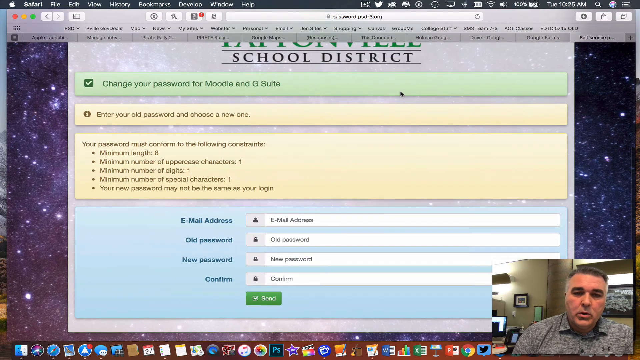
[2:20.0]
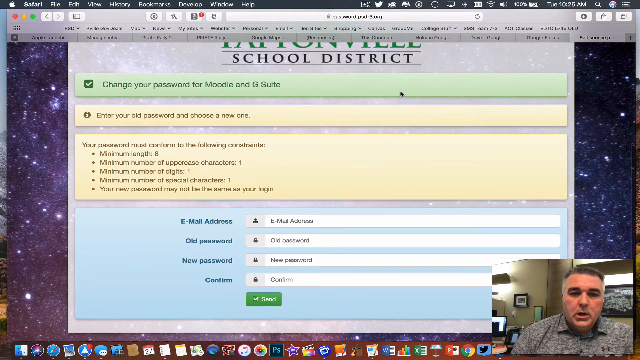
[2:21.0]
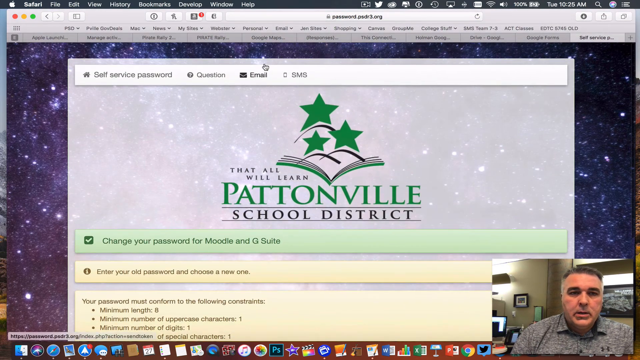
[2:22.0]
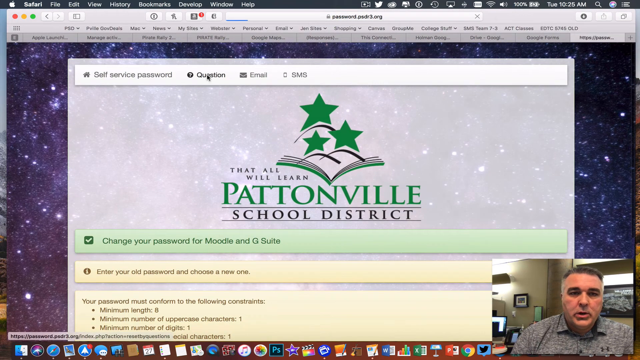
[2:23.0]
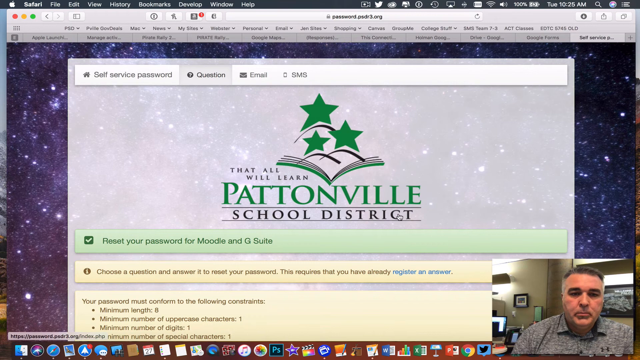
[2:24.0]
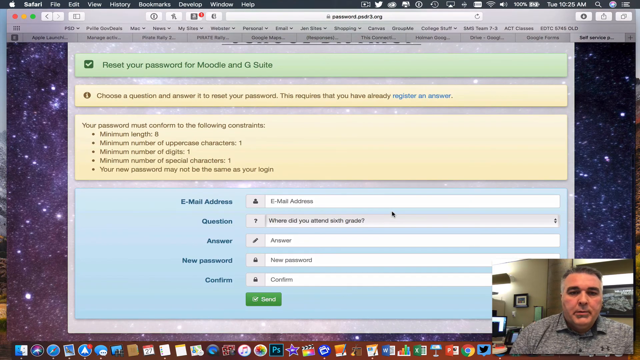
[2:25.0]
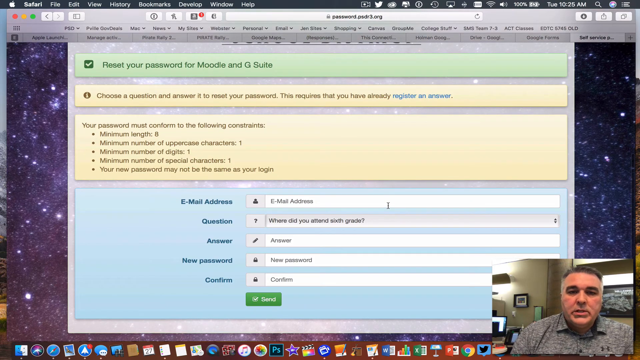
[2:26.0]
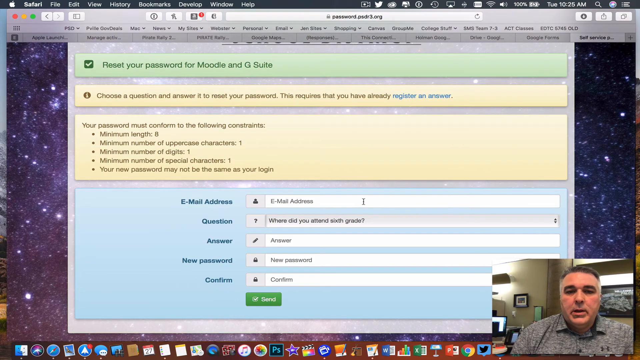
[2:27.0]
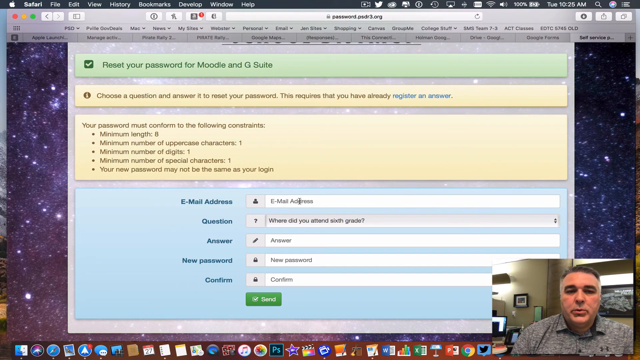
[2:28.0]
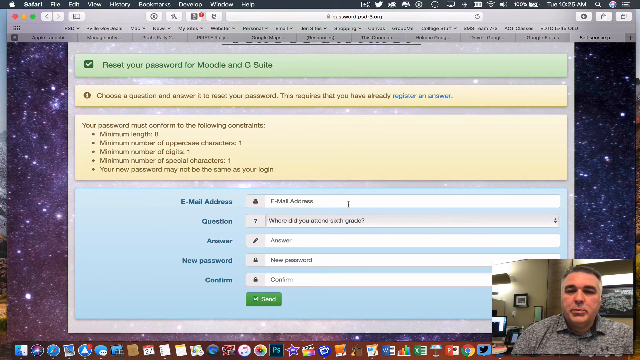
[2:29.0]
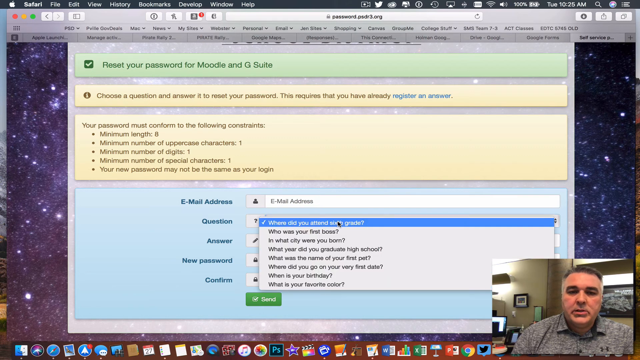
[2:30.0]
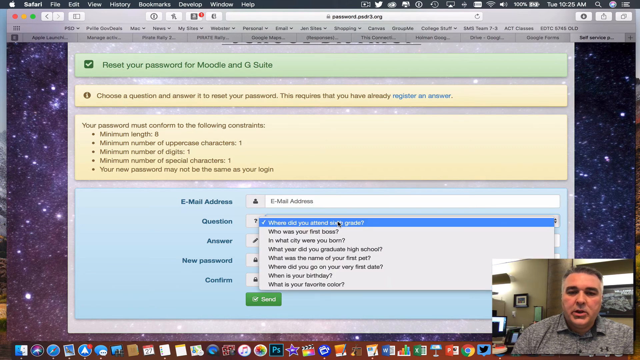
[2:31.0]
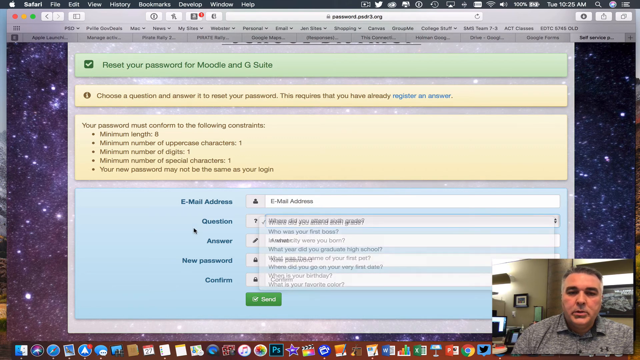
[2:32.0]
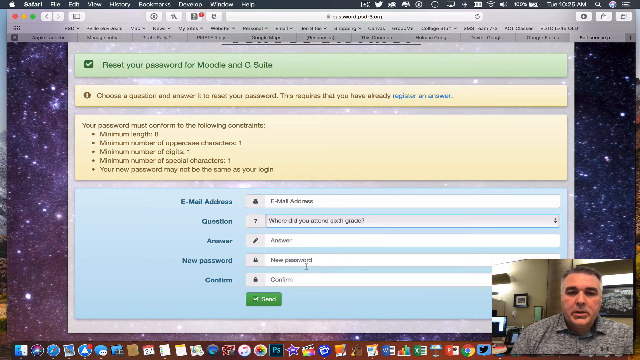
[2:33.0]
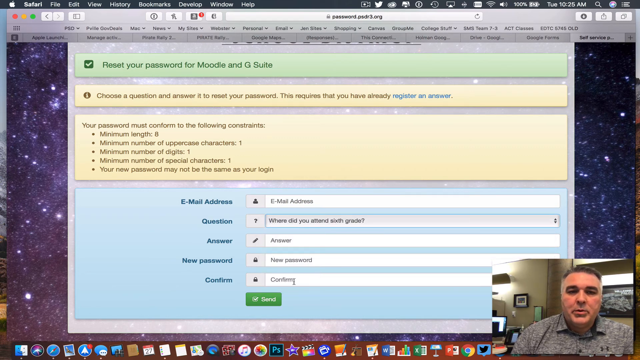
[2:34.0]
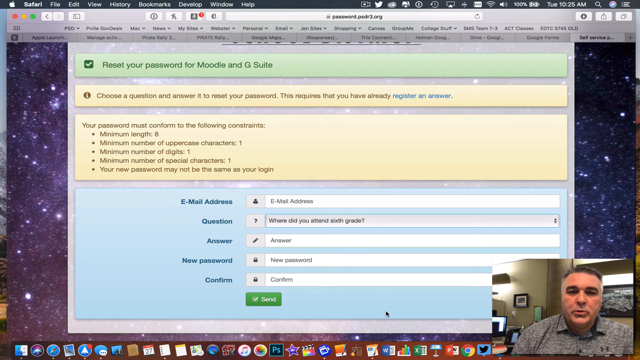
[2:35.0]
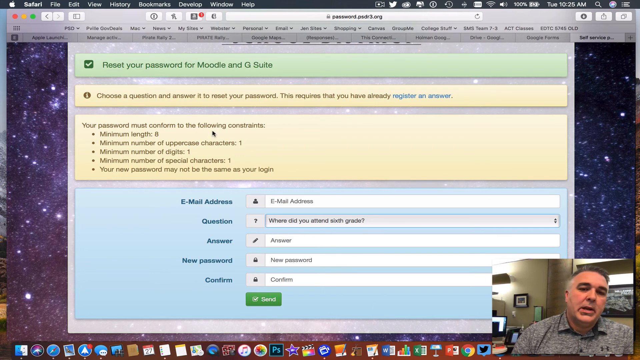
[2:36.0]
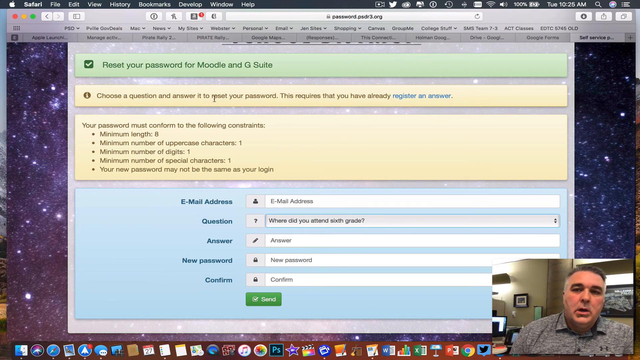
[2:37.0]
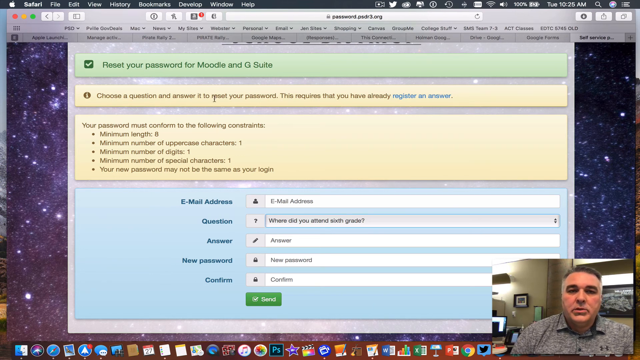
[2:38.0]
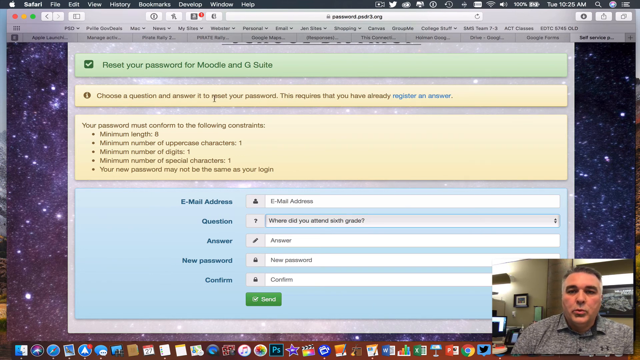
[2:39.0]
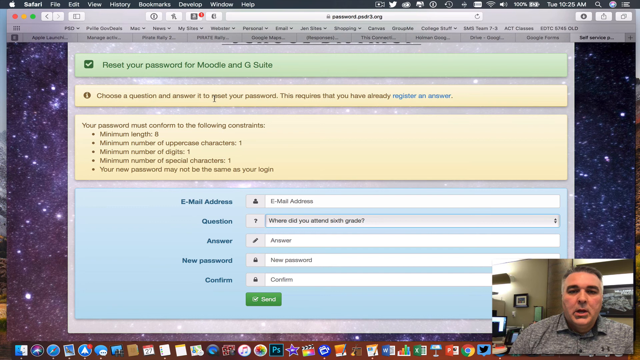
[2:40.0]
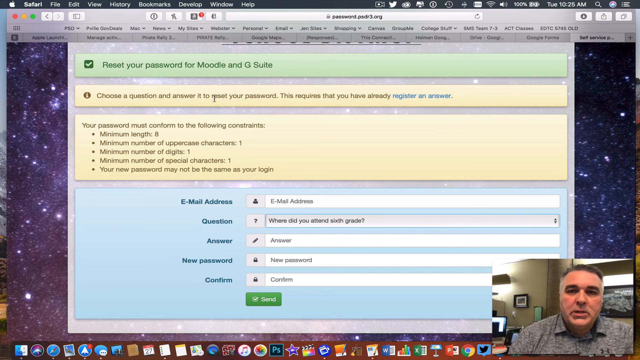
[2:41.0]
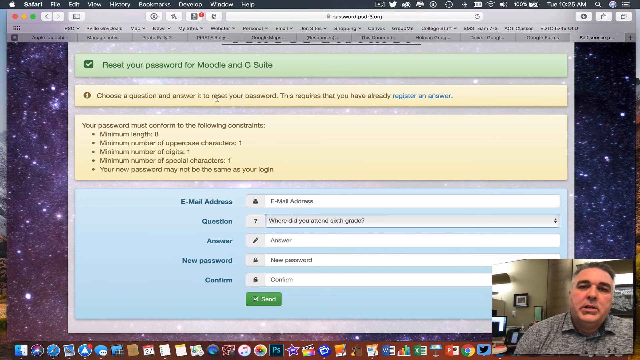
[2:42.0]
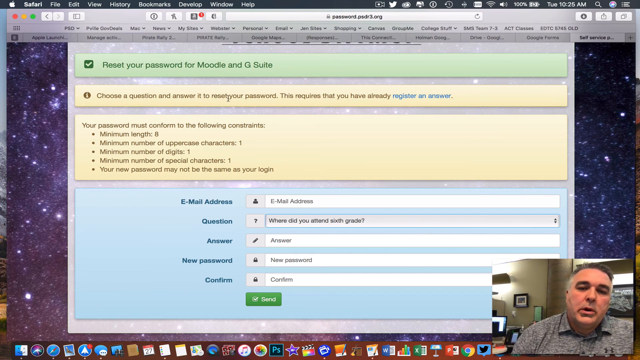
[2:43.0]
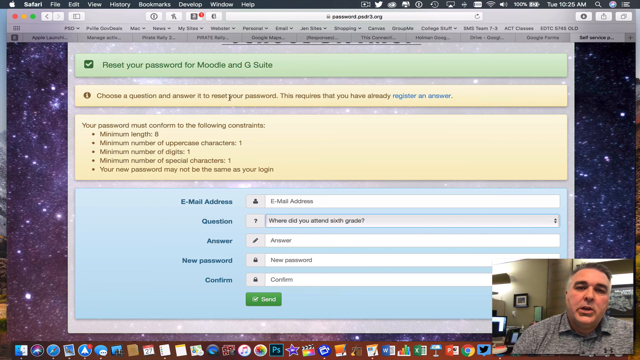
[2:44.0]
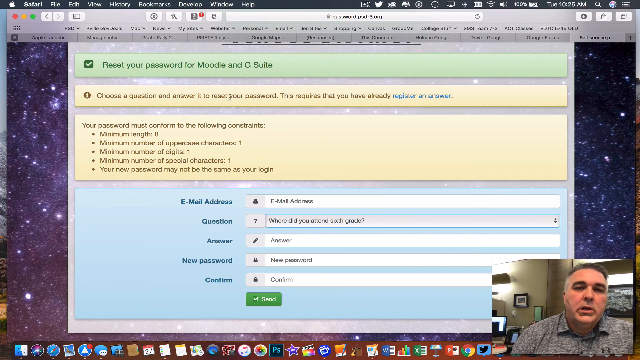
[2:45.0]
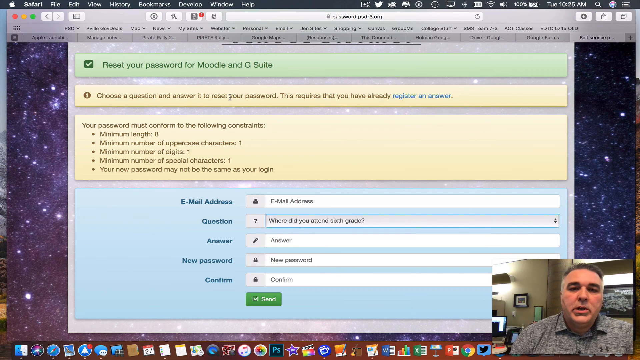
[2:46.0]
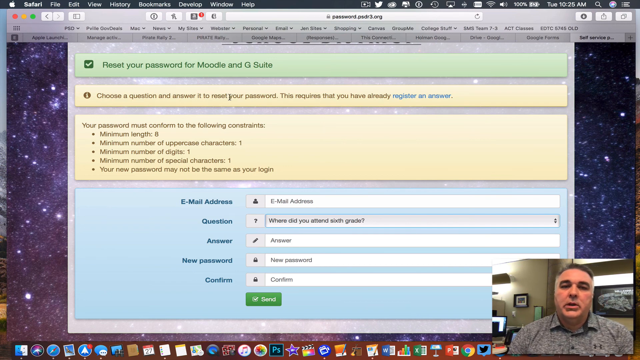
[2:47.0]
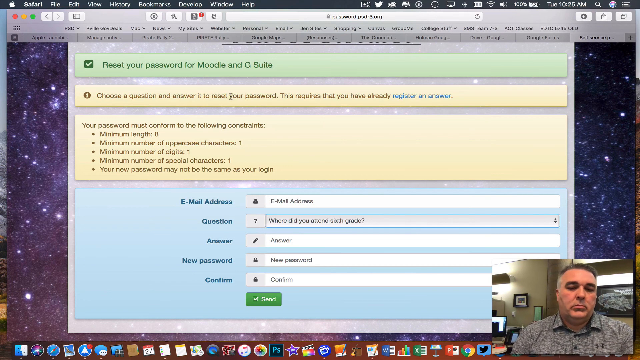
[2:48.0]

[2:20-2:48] The same man is still in the lower right-hand corner. A green rectangle reads "change your password from Moodle in G Suite." Below it are two yellow areas: the first says "enter your old password and choose a new one," and the second says "your password must conform to the following constraints. Minimum length, eight. Minimum number of uppercase capitals, one. Minimum number of digits, one. Minimum number of special capitals, one. Your new password may not be the same as your login information." He scrolls back up and clicks question again, then scrolls down, where the question field appears right after the email address, and clicks on the question. He hovers the mouse around the answer part, then moves it to the first yellow paragraph. He scrolls up slightly, and the black mouse pointer points toward the green heading about changing the password from Moodle to G Suite.